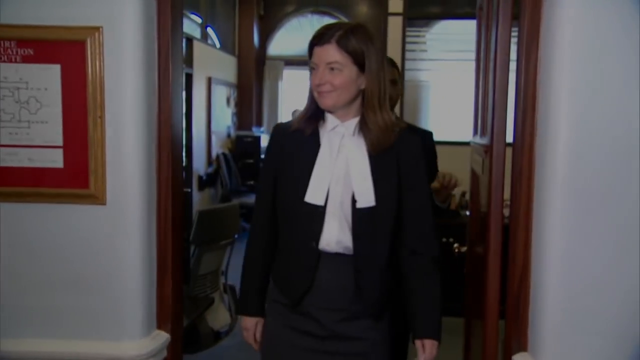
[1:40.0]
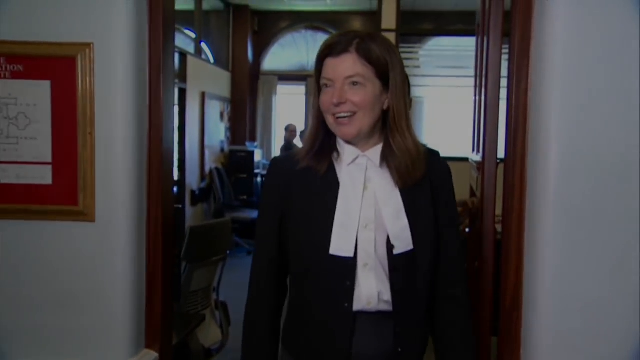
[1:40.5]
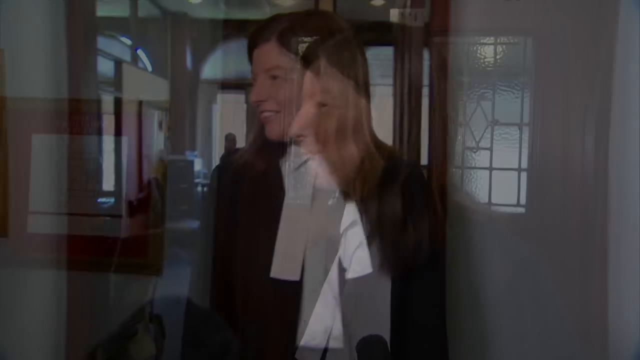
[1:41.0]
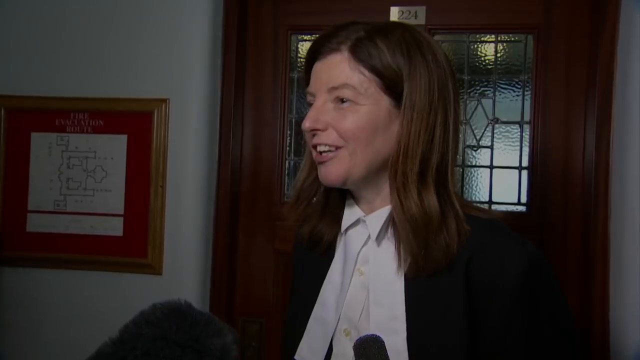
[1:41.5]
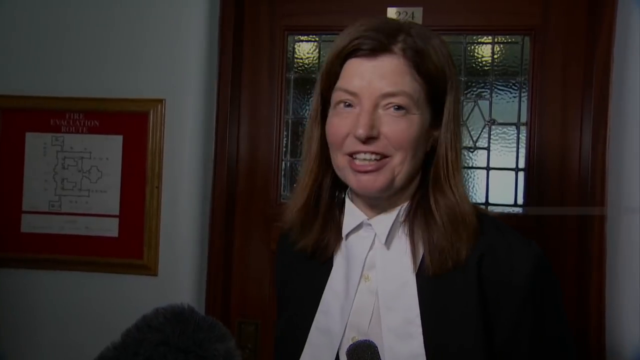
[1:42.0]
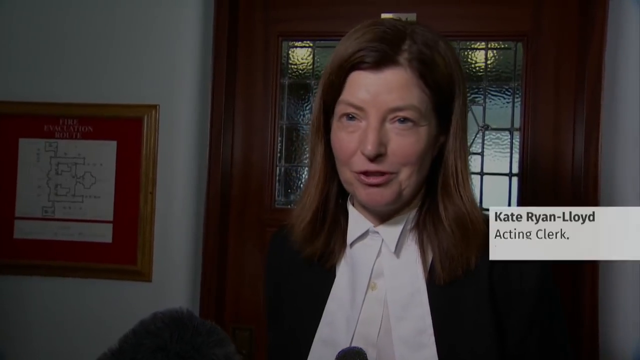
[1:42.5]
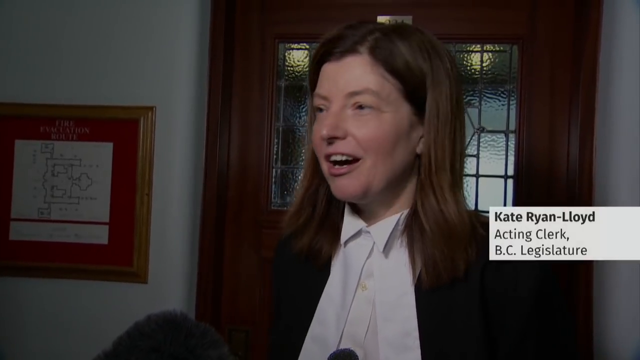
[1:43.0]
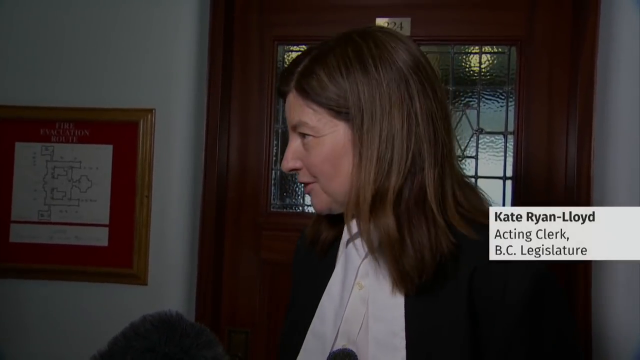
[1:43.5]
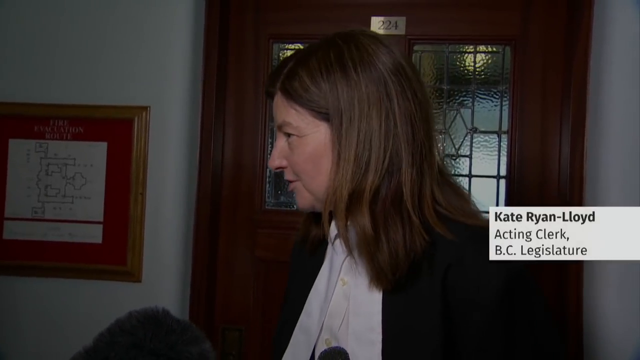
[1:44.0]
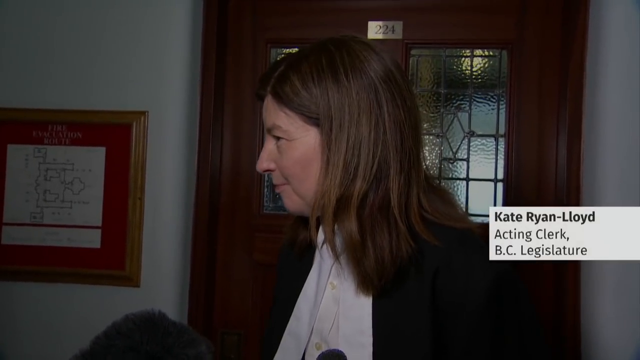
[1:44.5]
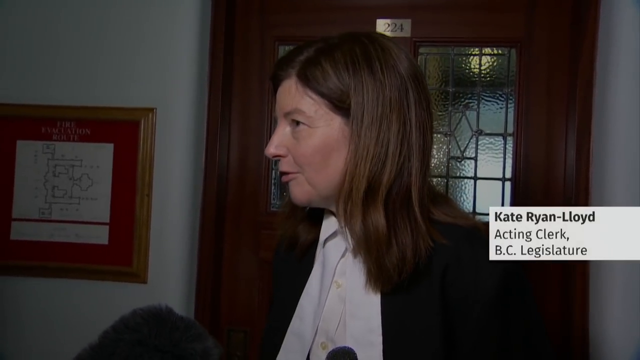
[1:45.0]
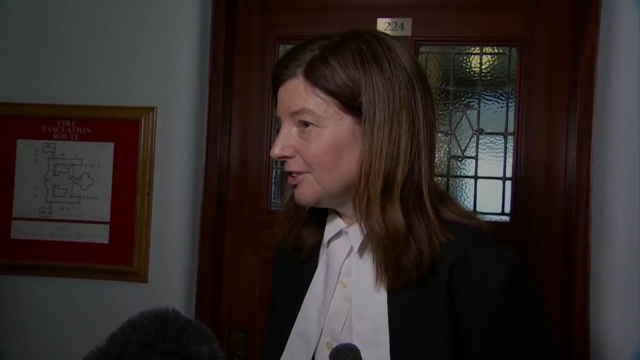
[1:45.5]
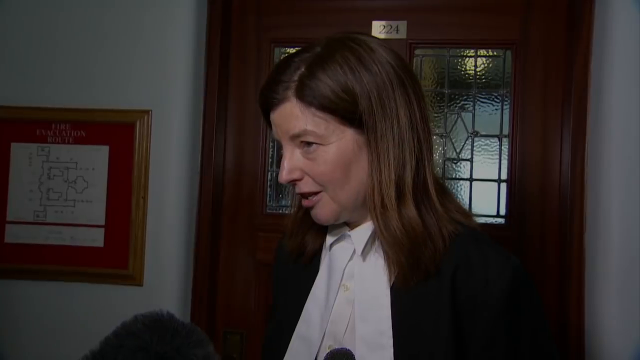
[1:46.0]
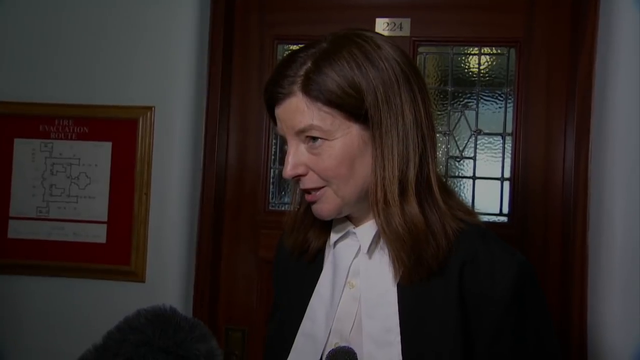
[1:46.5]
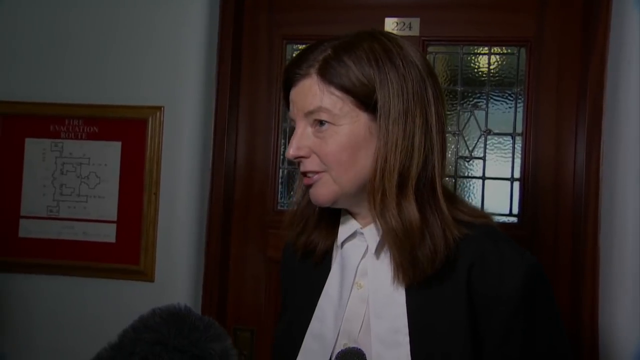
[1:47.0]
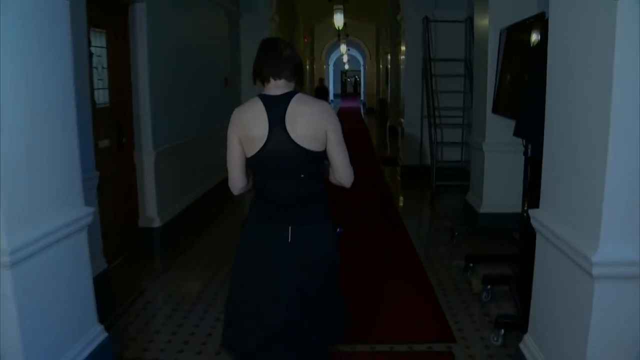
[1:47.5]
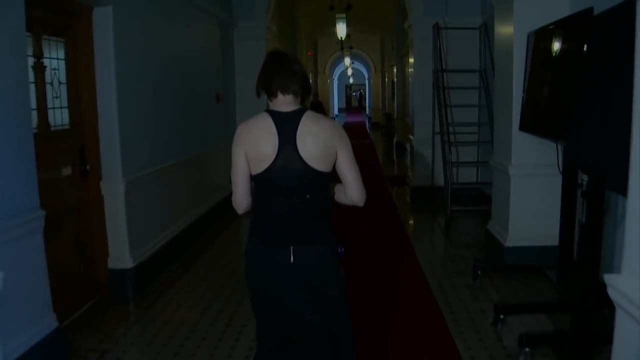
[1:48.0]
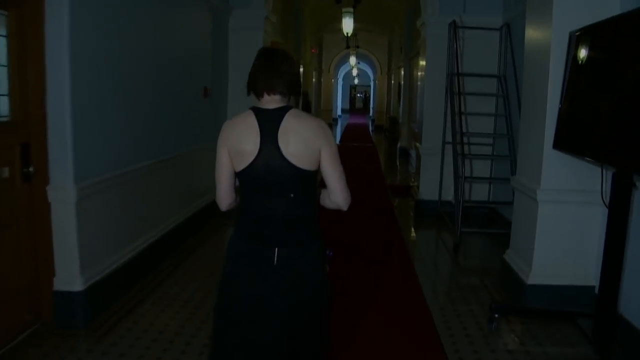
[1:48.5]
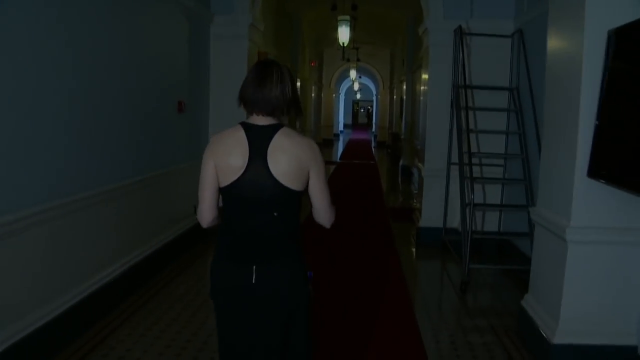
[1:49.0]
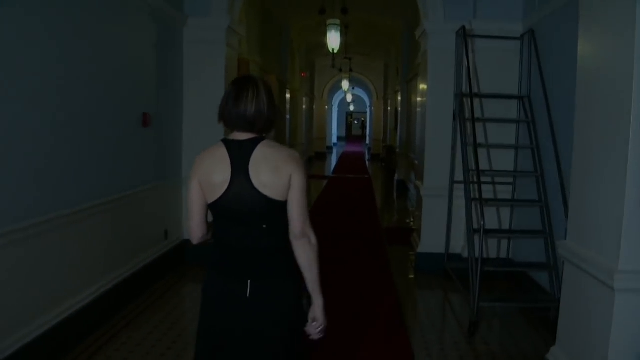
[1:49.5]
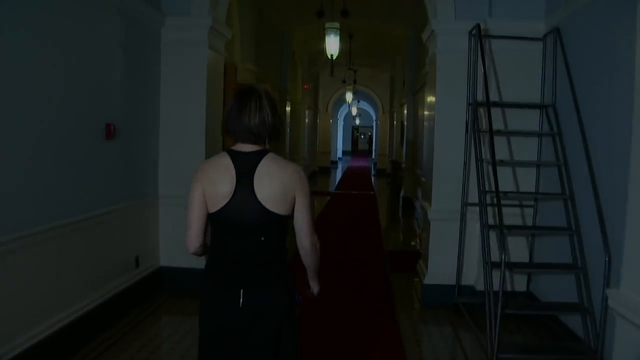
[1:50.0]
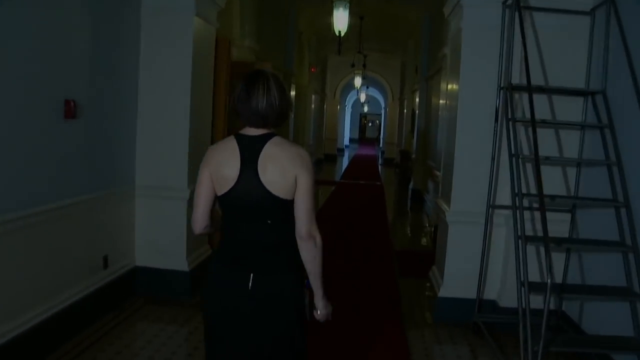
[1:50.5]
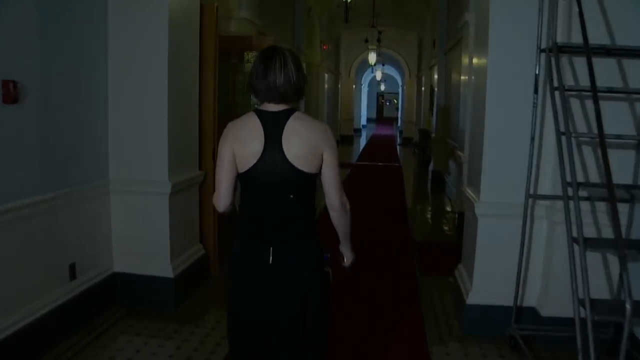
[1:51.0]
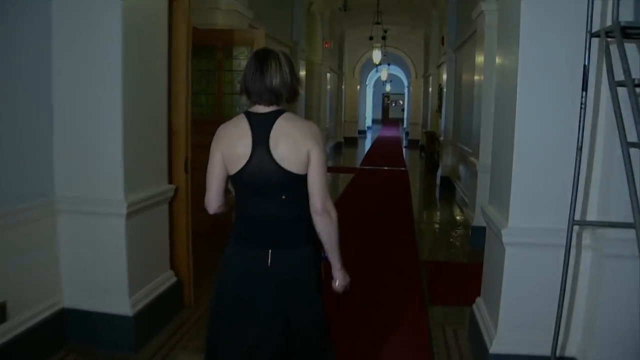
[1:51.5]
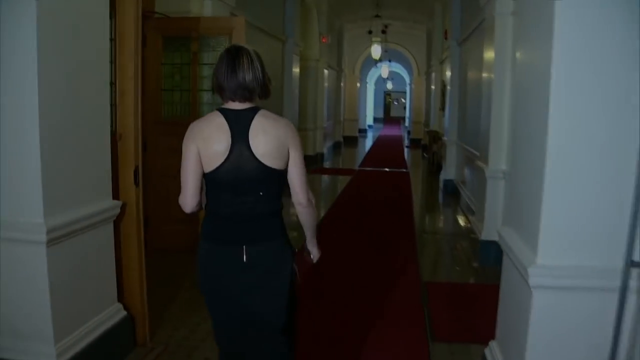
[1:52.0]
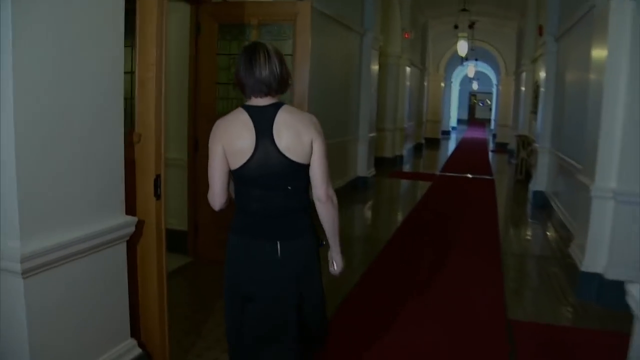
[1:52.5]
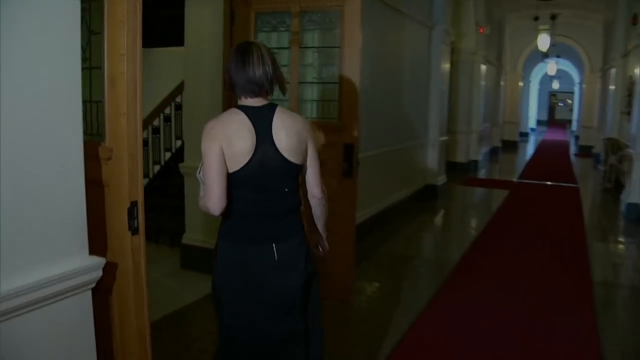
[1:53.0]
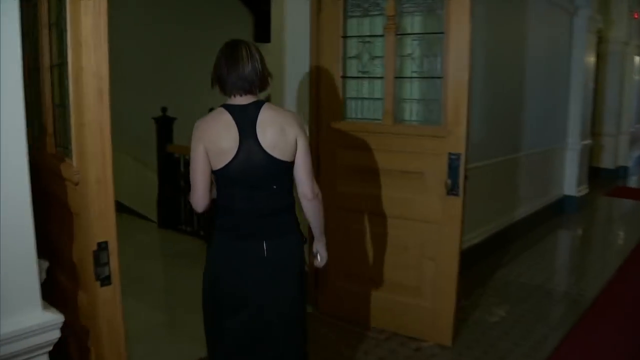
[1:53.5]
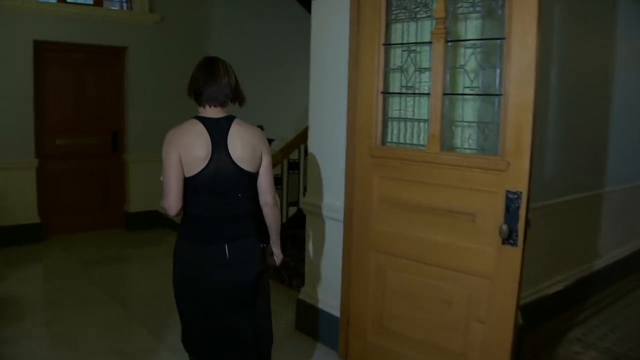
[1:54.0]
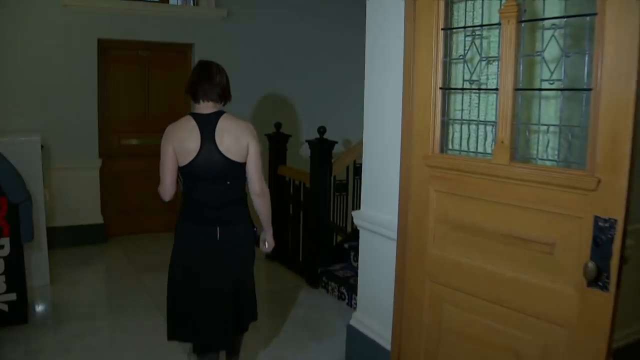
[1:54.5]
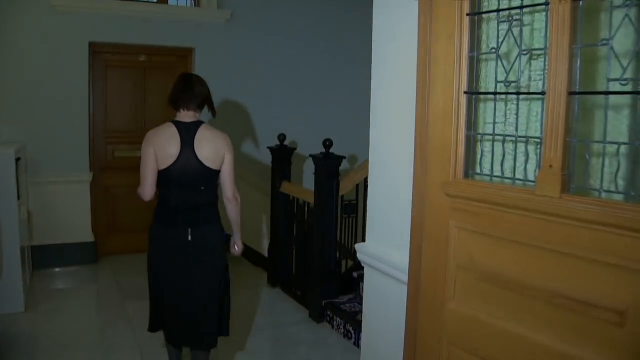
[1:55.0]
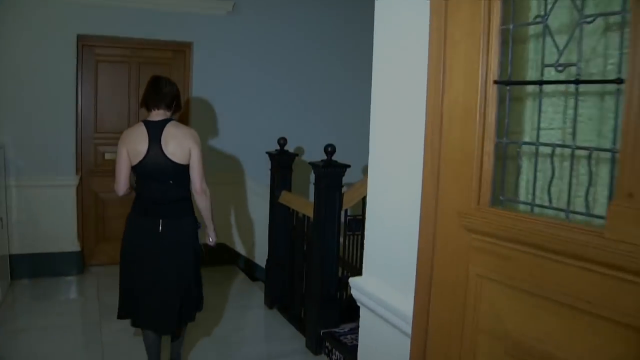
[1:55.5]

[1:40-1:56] A woman in a long black outfit with a white shirt underneath enters a room, with a man in a suit, with black hair and some beard, behind her. The video transitions to an interview with this woman, who is white with medium-length brown hair; behind her are a wooden door with a small glass window and white walls with a red frame. A banner reads "Kate Ryan Lloyd, Acting clerk, BC legislature", and she keeps speaking into the microphones of some reporters. Then footage shows a white woman in a black tank top walking through a dimly lit corridor and entering through some wooden doors, where she seems to be heading down the stairs.